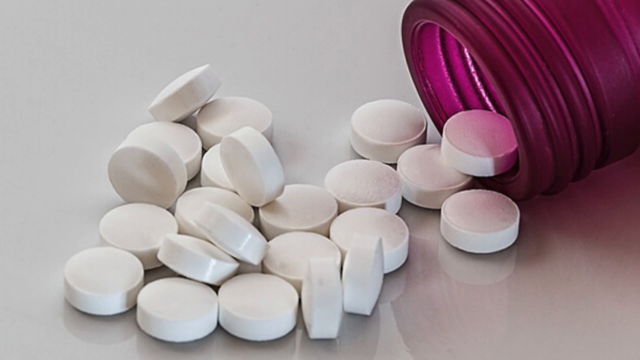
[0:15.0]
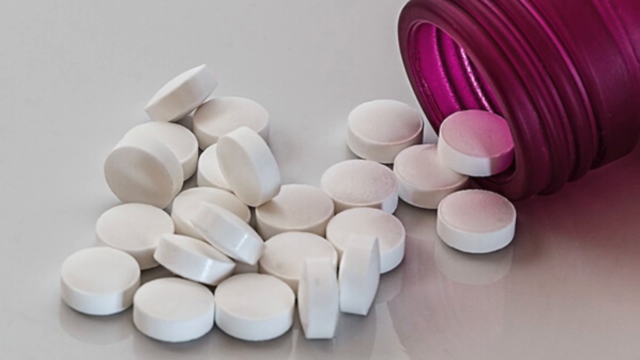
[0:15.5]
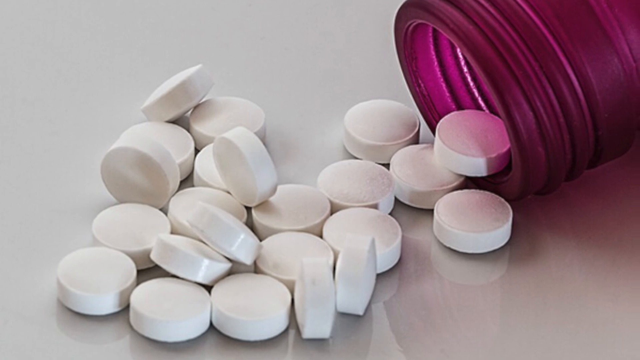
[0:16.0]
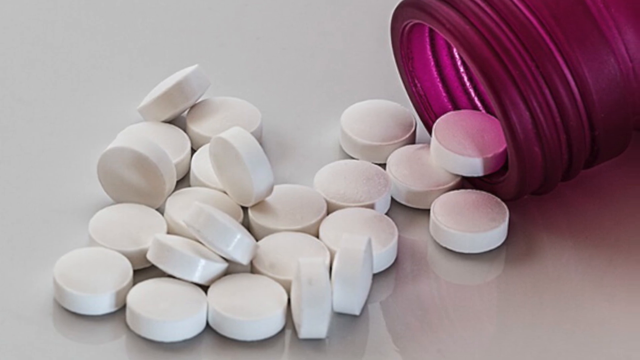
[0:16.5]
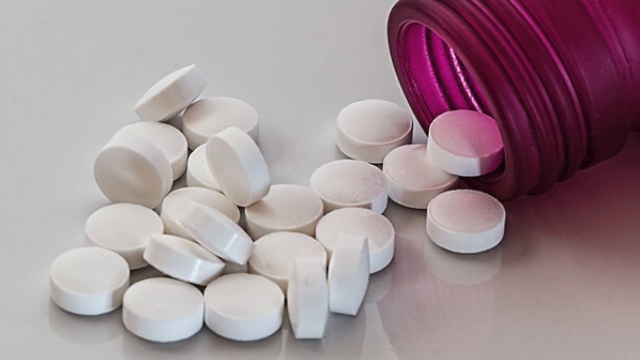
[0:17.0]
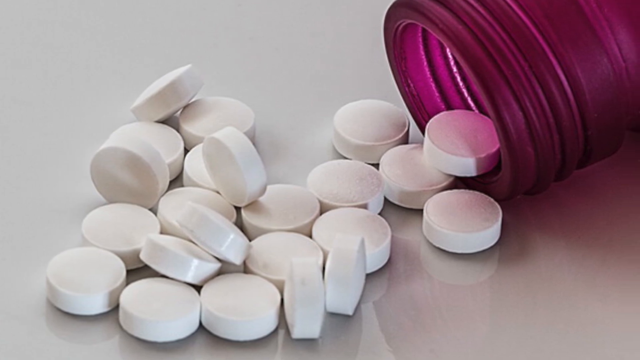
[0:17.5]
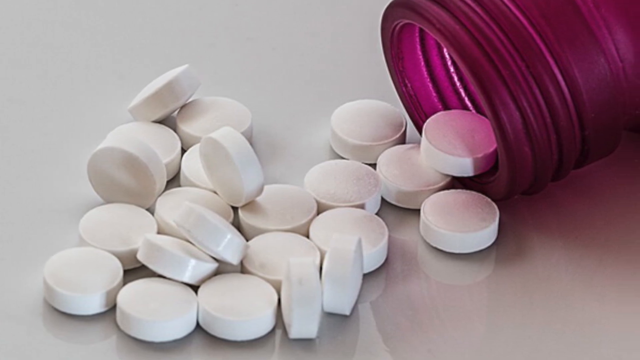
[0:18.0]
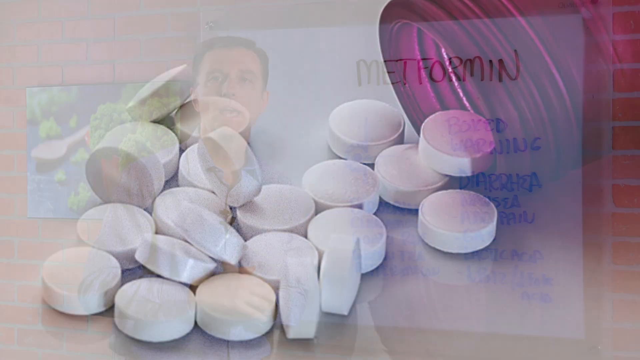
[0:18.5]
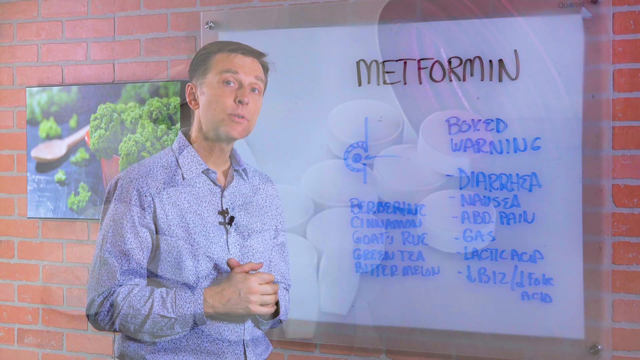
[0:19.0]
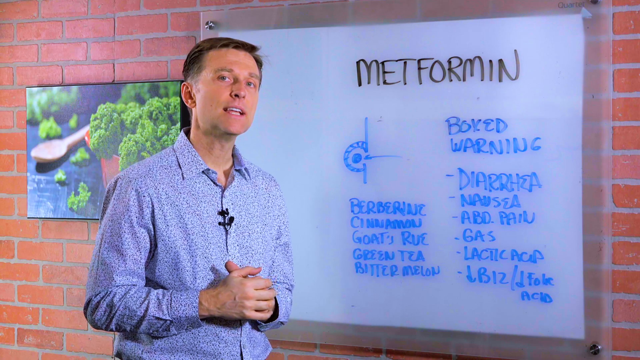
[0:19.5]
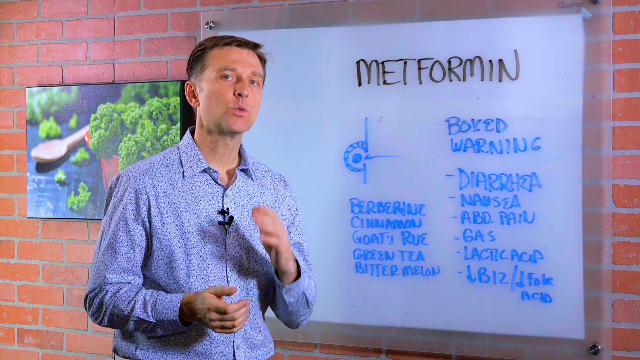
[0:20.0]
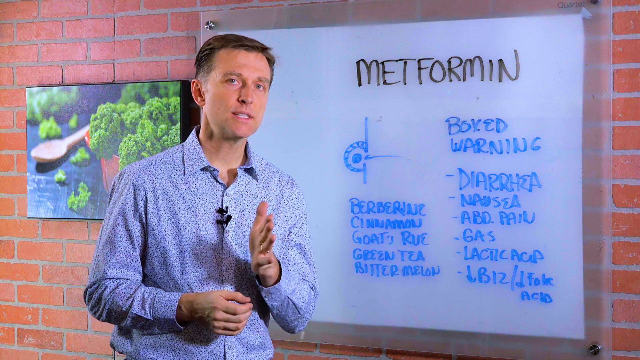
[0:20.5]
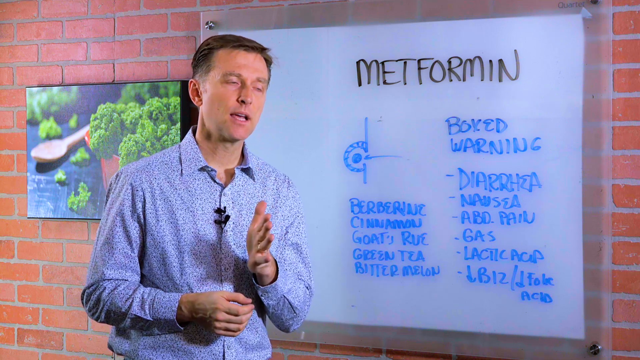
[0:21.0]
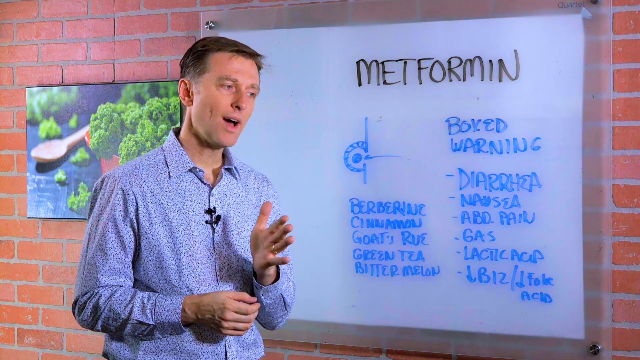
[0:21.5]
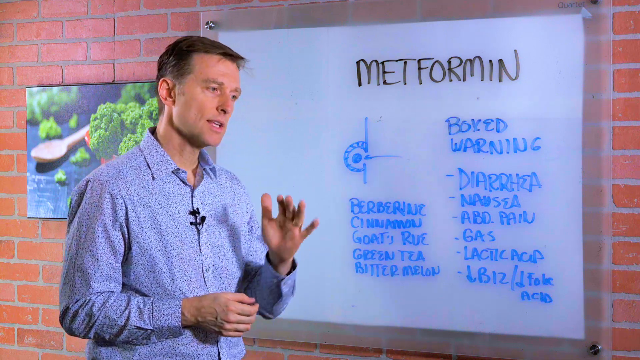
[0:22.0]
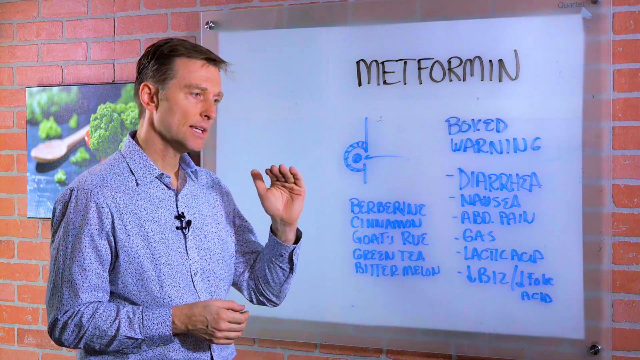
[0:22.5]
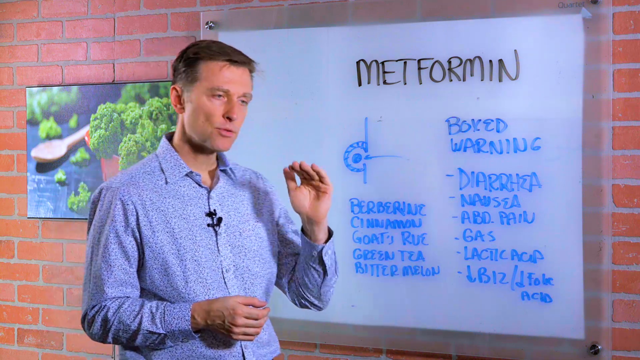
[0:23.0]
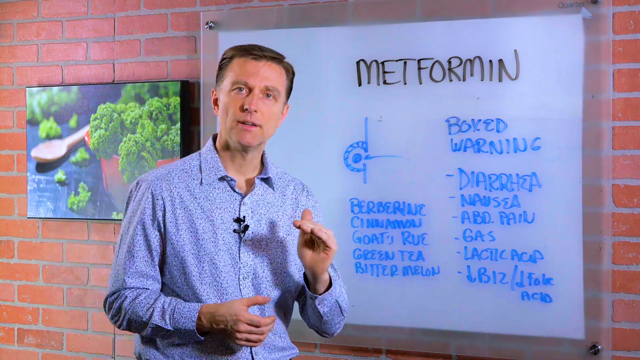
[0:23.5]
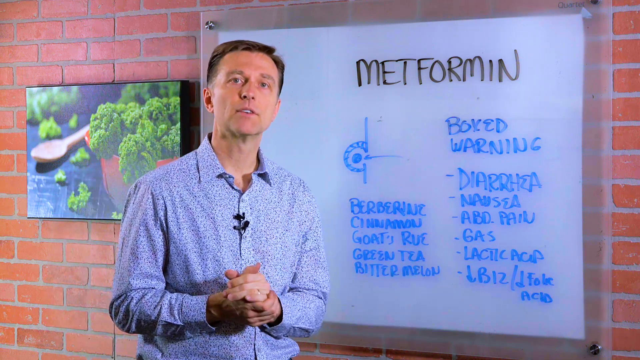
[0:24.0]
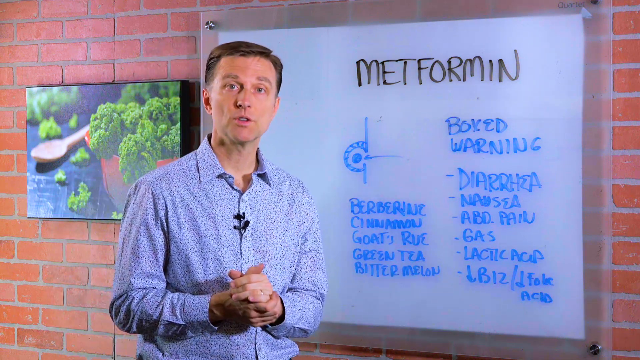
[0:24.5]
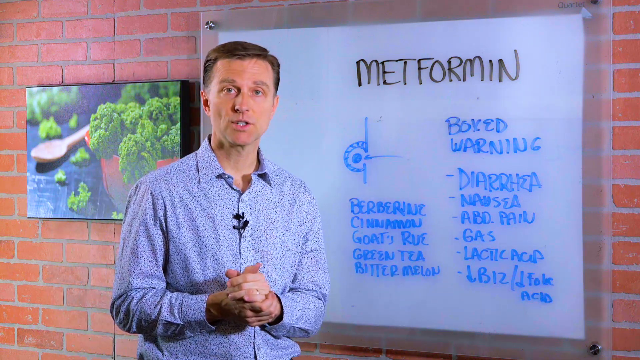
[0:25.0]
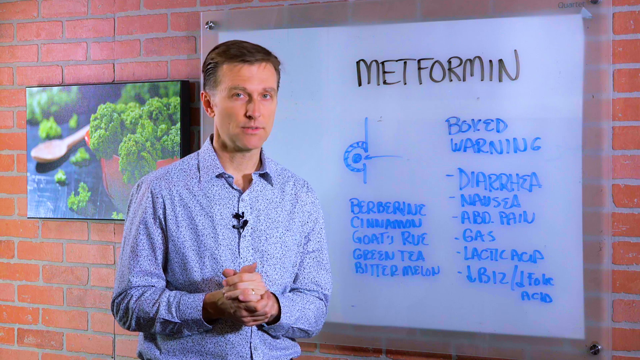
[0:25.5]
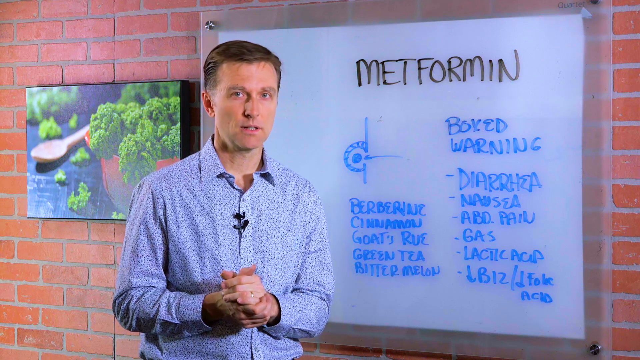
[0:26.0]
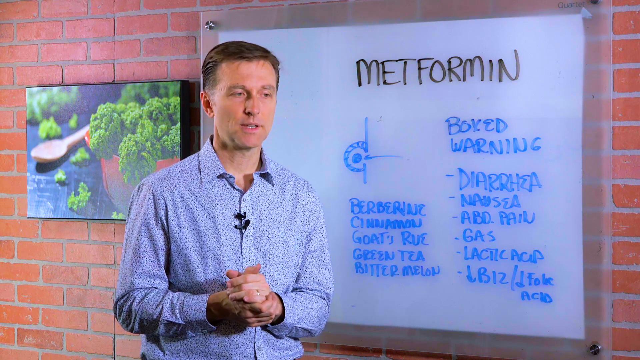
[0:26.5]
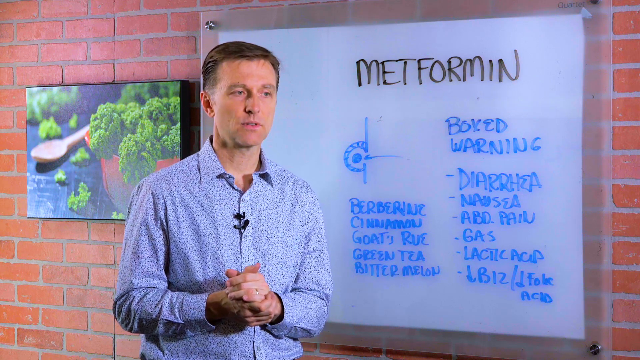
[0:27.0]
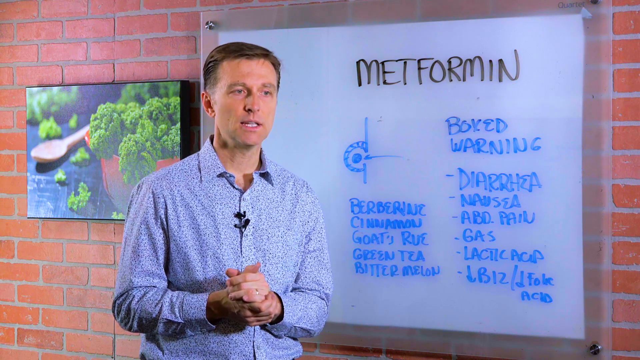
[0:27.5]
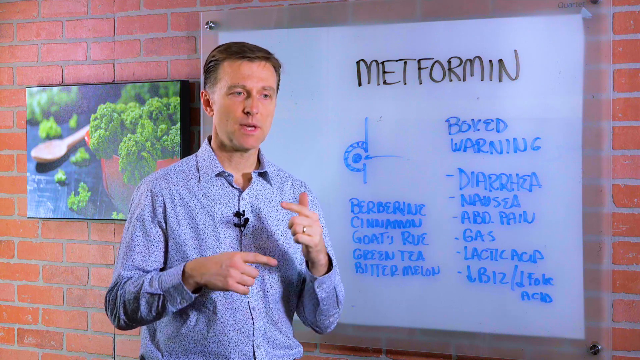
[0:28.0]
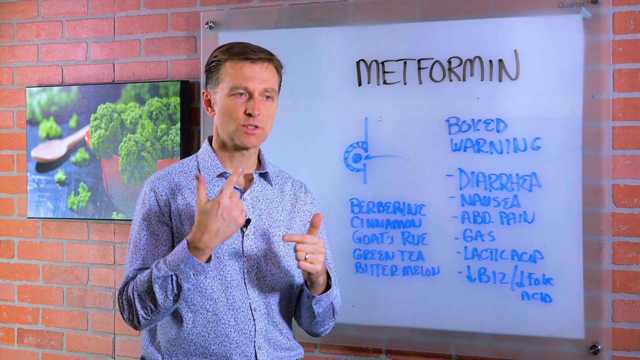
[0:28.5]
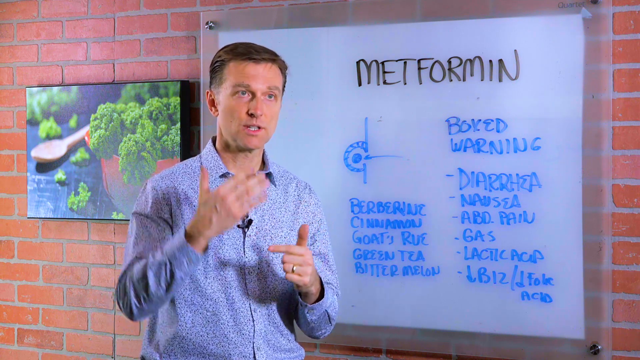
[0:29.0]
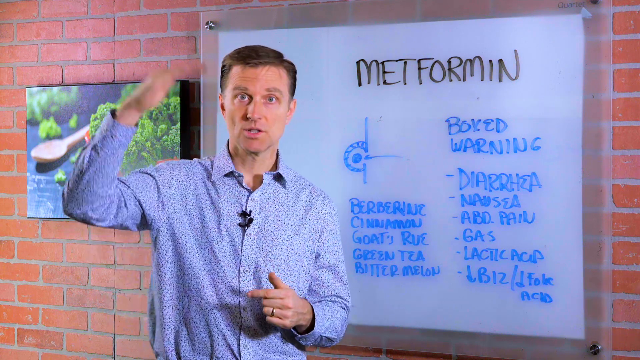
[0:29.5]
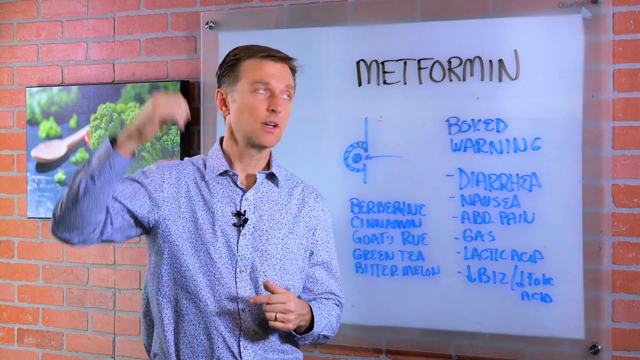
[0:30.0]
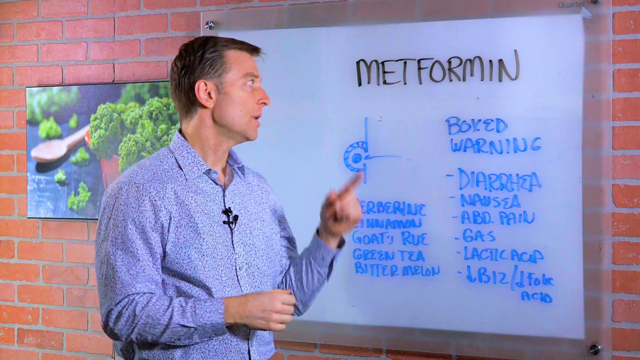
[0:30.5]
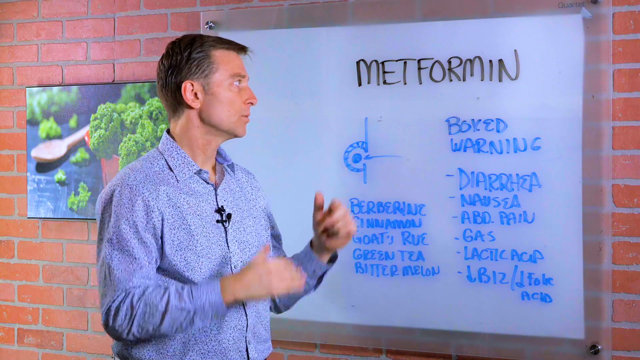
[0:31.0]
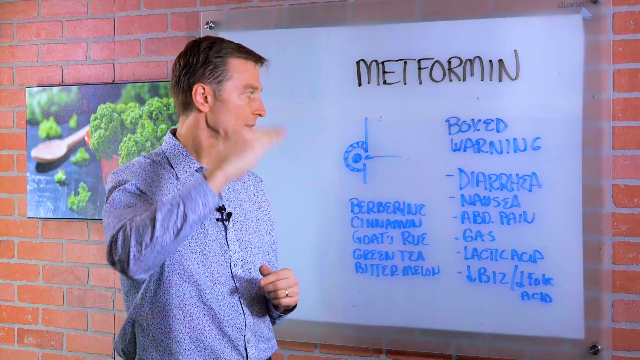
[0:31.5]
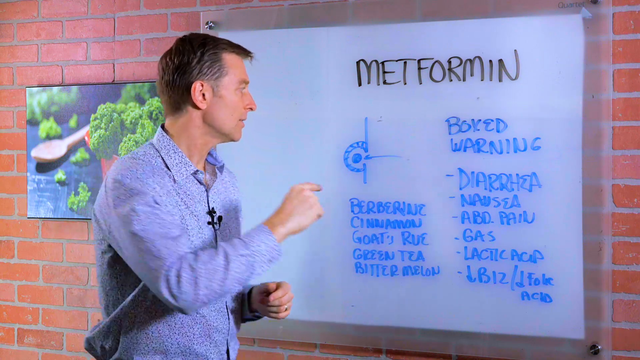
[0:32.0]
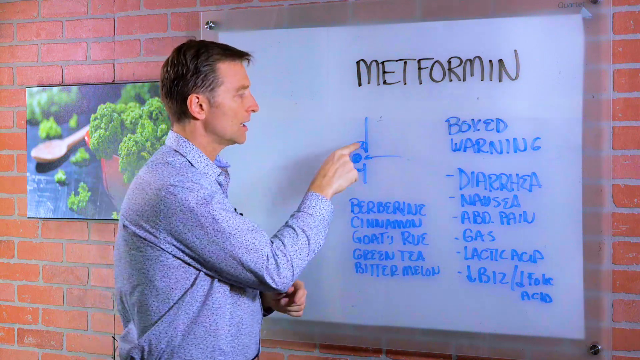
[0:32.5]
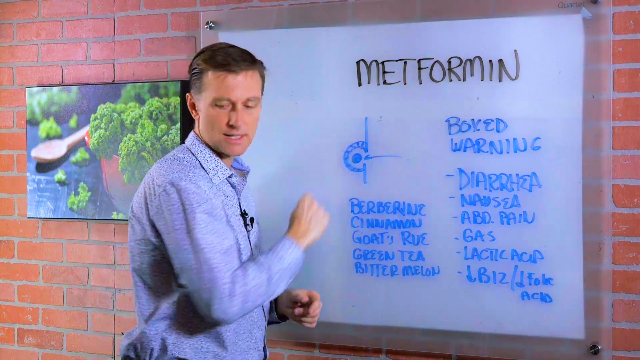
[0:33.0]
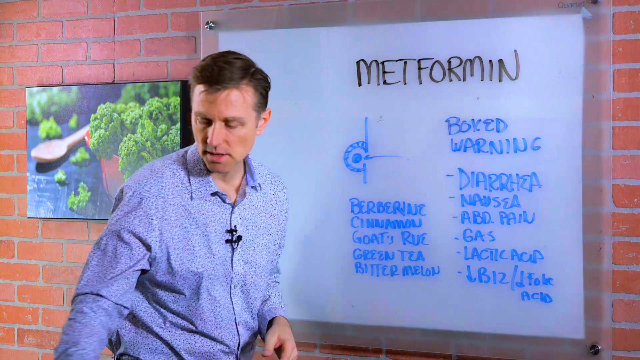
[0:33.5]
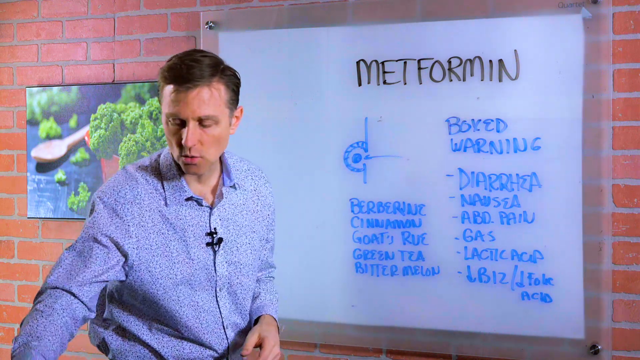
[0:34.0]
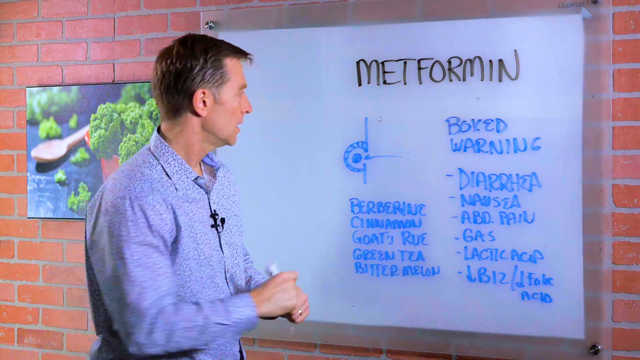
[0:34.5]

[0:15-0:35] The man turns to the whiteboard and points at the header that reads "metformin" in black text. He turns back toward the camera and gestures with his hands, raising and lowering a cupped palm as though explaining higher and lower, then raises his right hand all the way in the air. He picks up a marker and begins to turn toward the whiteboard. The video cuts to stock footage of a brown glass pill bottle and white pills on a white background. Back at the board, the man points to the diagram he has made, which appears to be either a cell or something with a cross section, and points at one of the arrows going through it. He returns his hands to the cupped position for a few moments, then keeps explaining the whiteboard with his hands. At one point he fully turns his body toward the whiteboard and points to a section on the left-hand side that reads "green tea." He then continues talking to the camera, using his hands to illustrate the different portions.